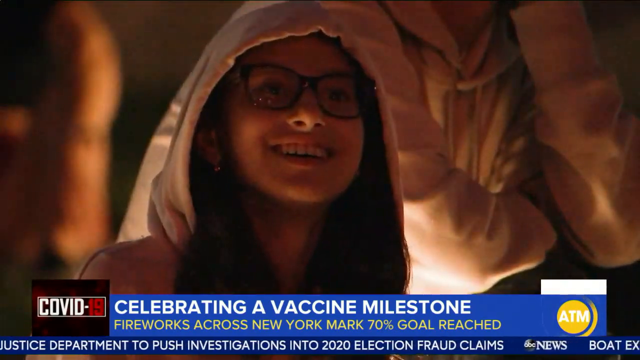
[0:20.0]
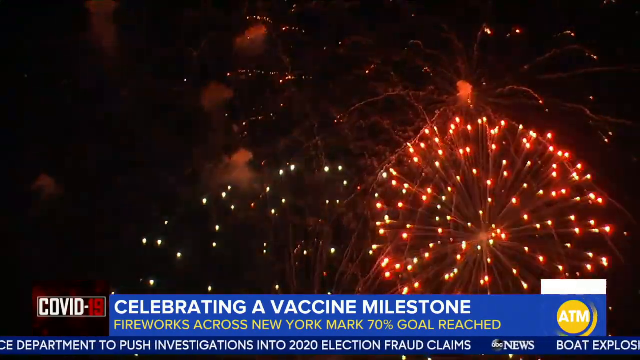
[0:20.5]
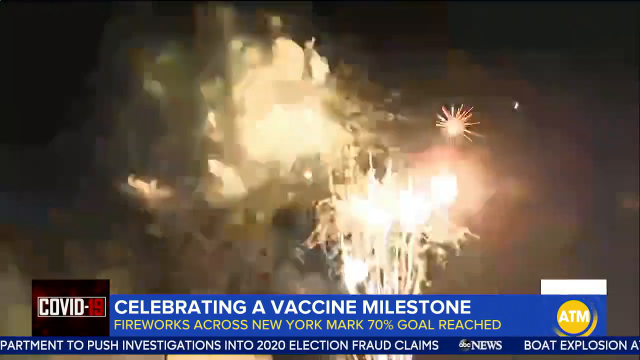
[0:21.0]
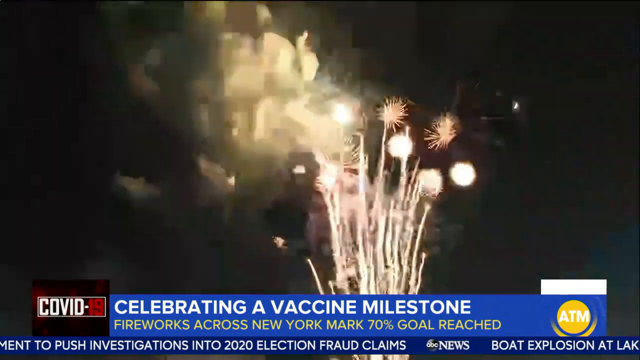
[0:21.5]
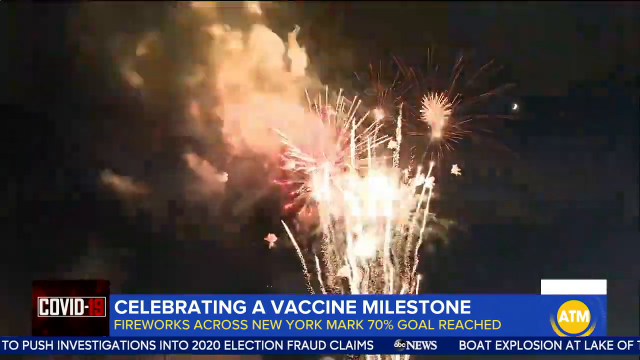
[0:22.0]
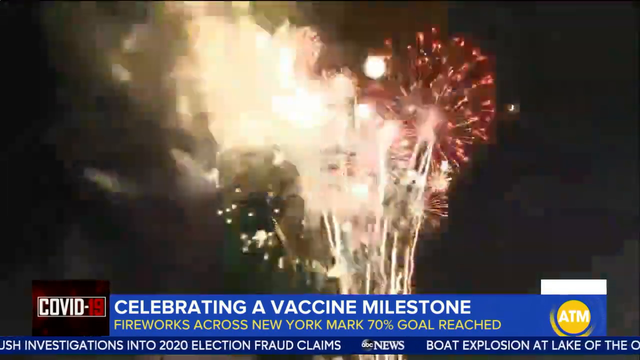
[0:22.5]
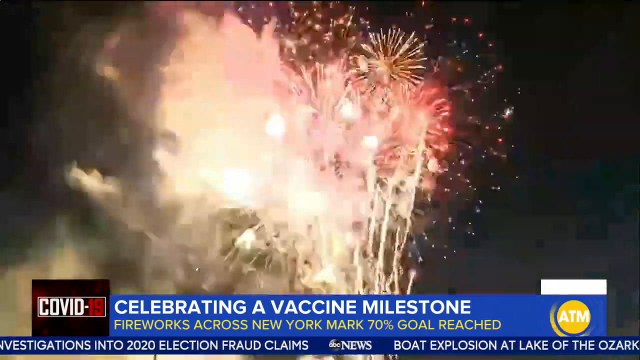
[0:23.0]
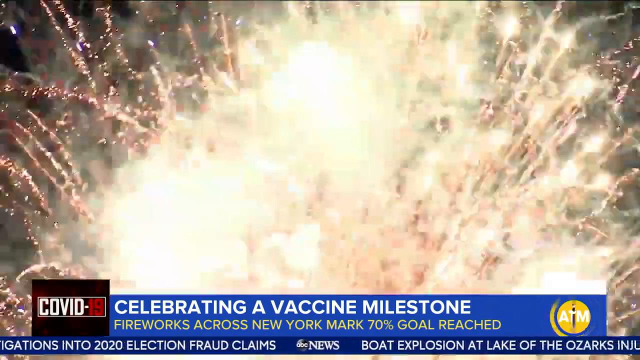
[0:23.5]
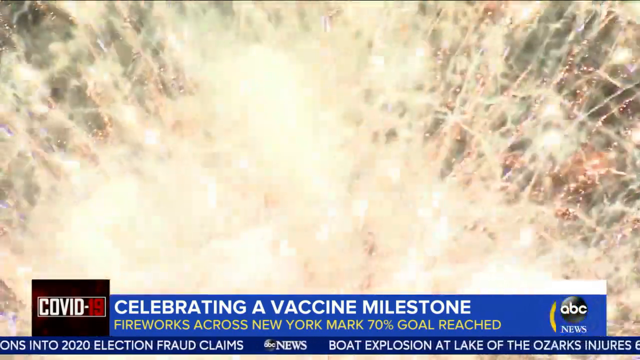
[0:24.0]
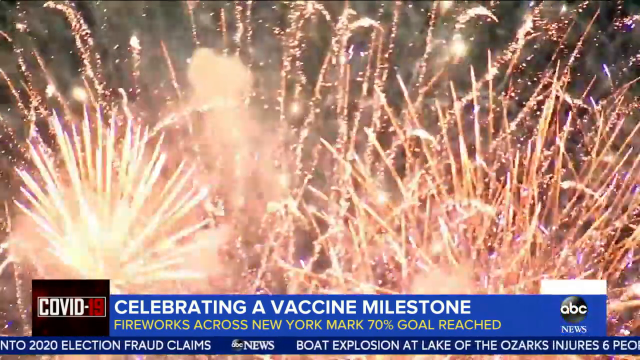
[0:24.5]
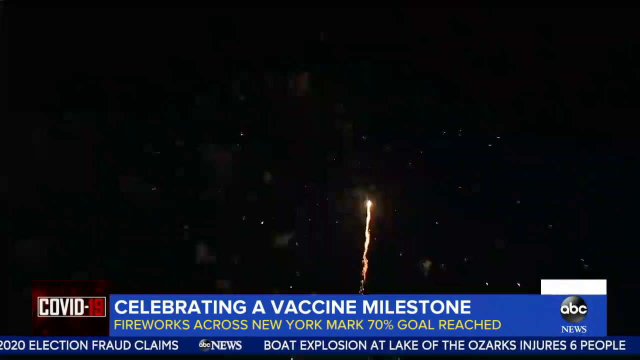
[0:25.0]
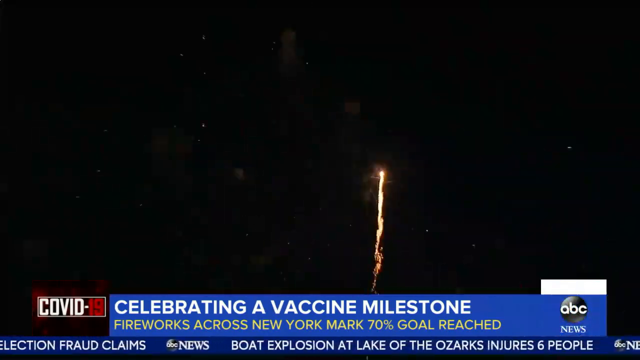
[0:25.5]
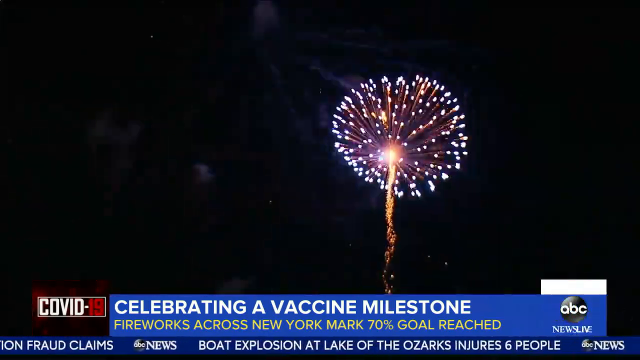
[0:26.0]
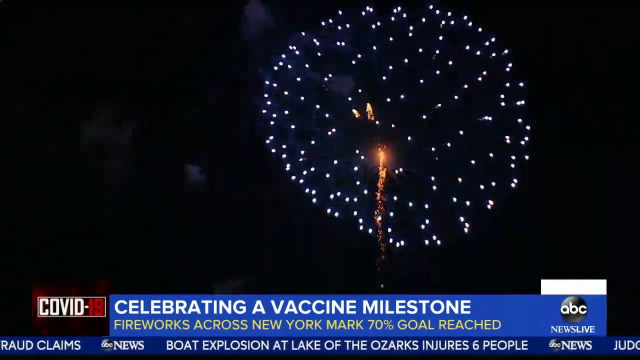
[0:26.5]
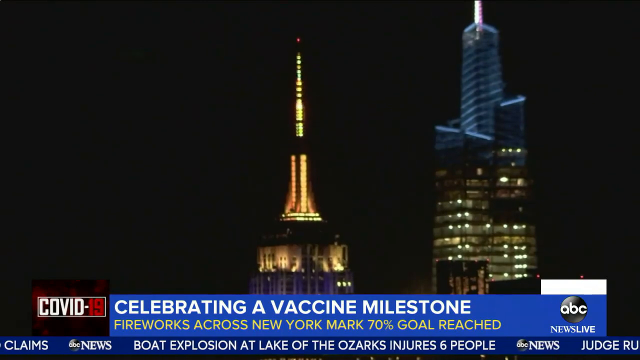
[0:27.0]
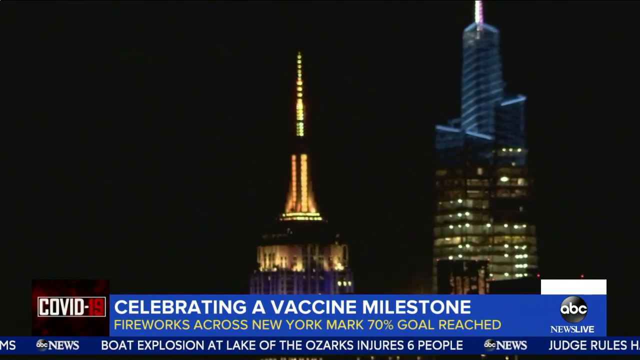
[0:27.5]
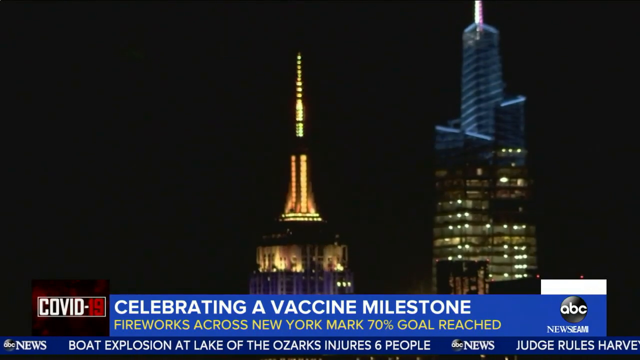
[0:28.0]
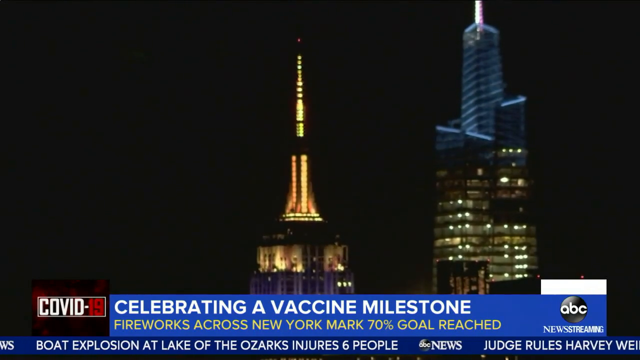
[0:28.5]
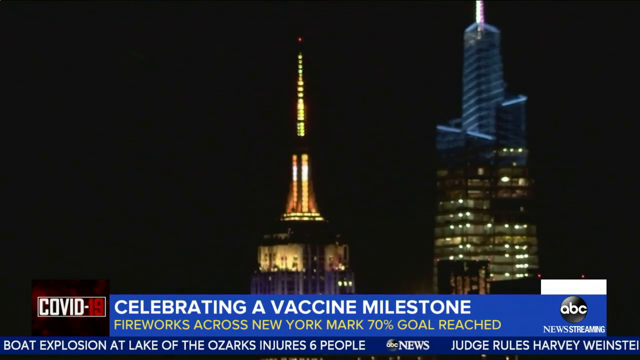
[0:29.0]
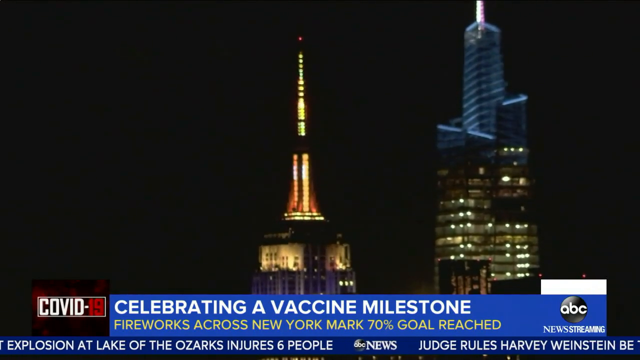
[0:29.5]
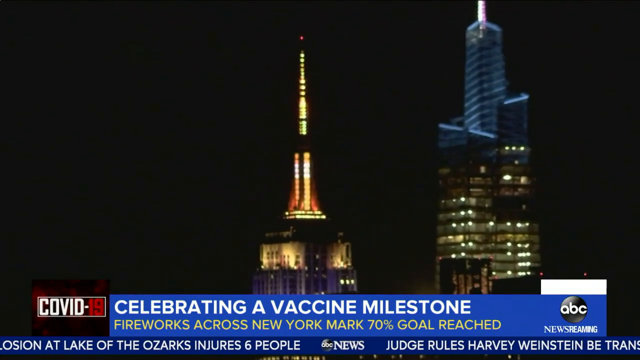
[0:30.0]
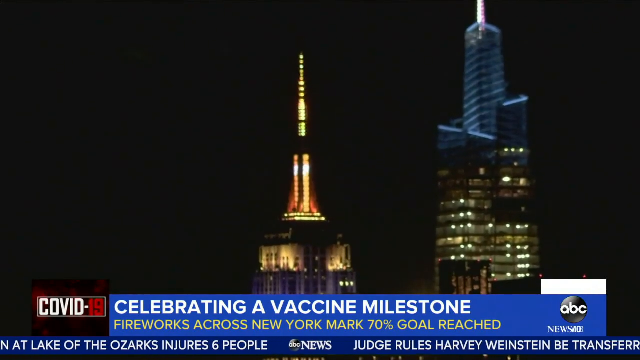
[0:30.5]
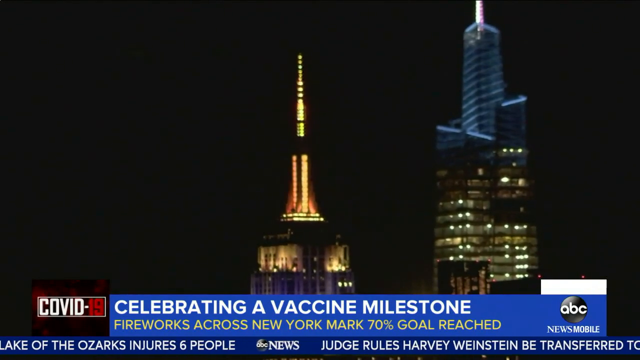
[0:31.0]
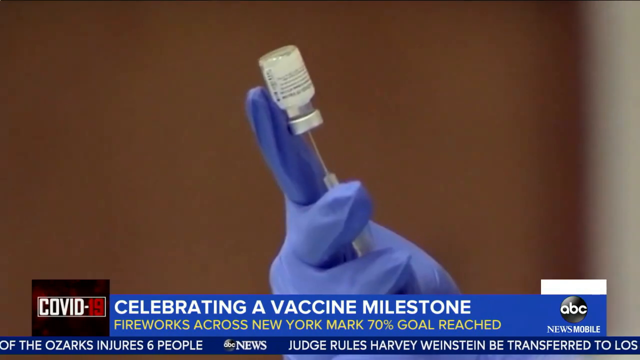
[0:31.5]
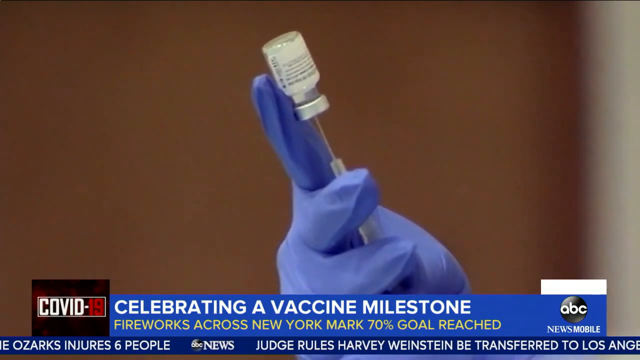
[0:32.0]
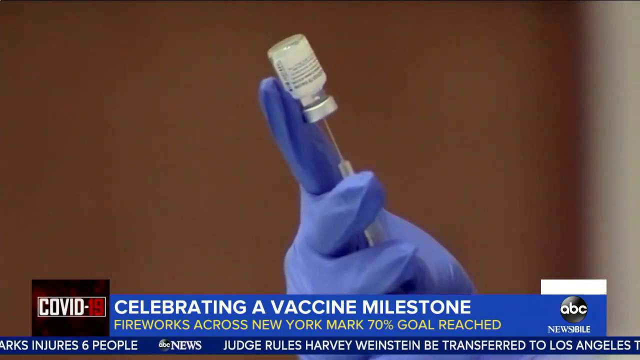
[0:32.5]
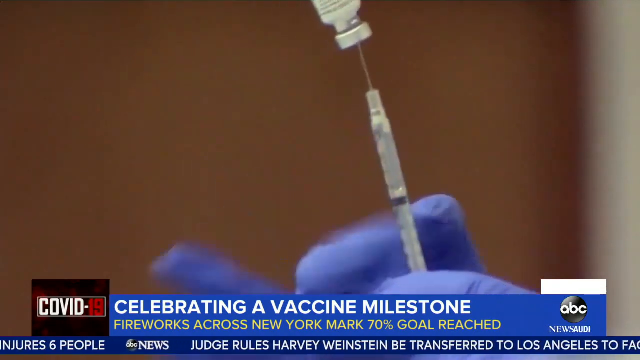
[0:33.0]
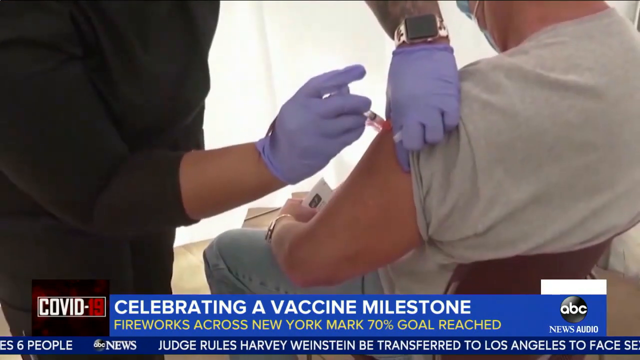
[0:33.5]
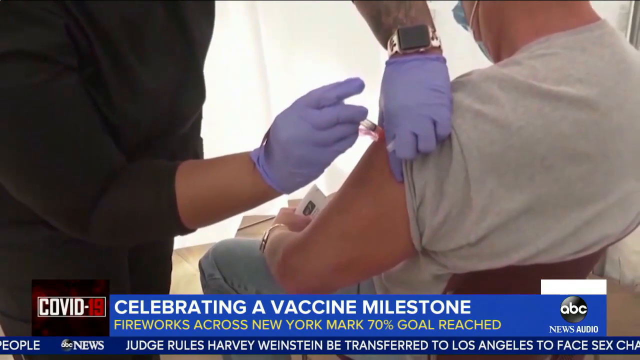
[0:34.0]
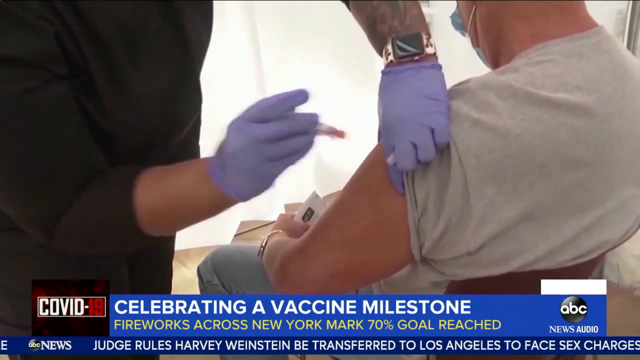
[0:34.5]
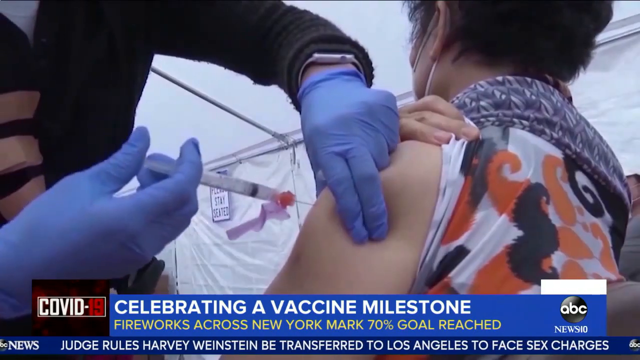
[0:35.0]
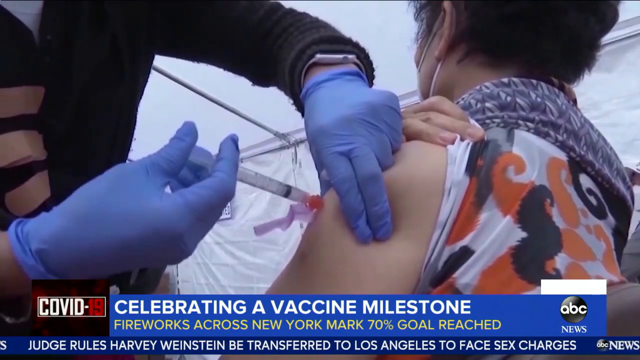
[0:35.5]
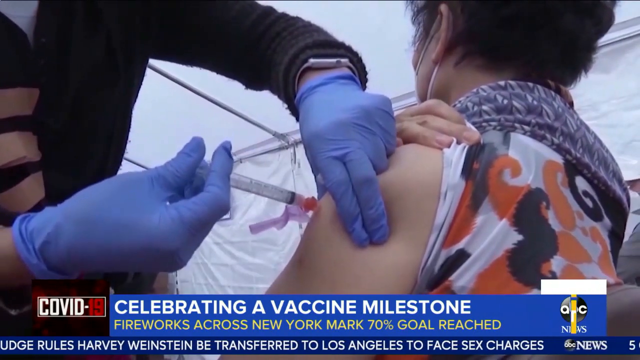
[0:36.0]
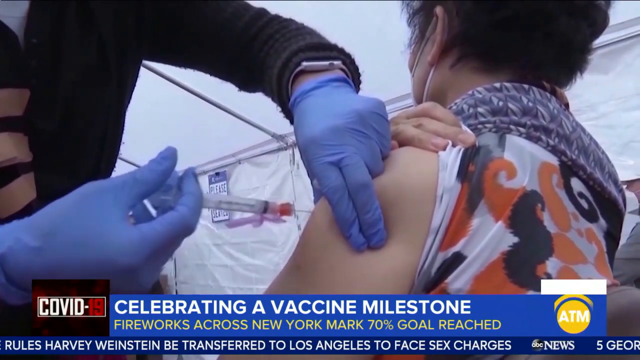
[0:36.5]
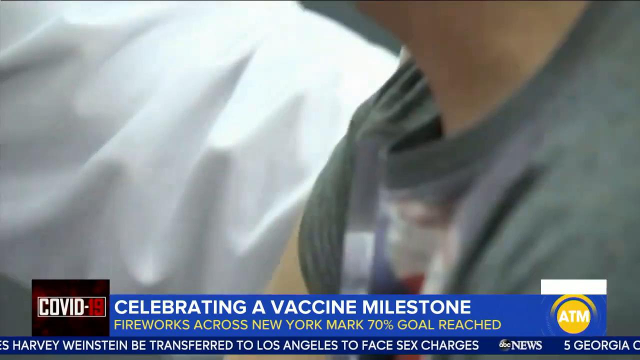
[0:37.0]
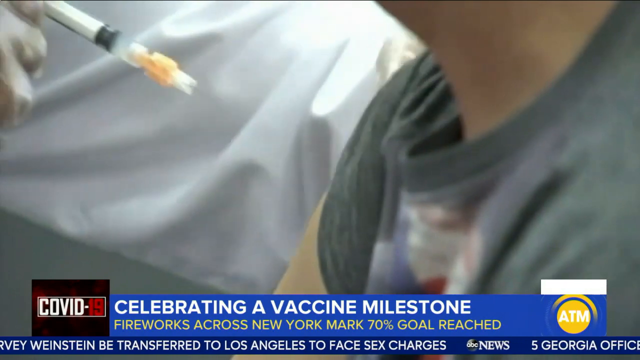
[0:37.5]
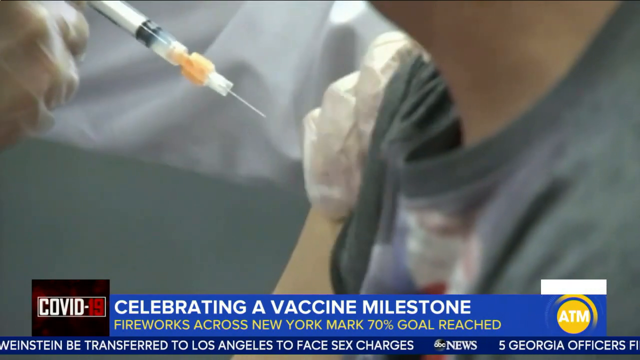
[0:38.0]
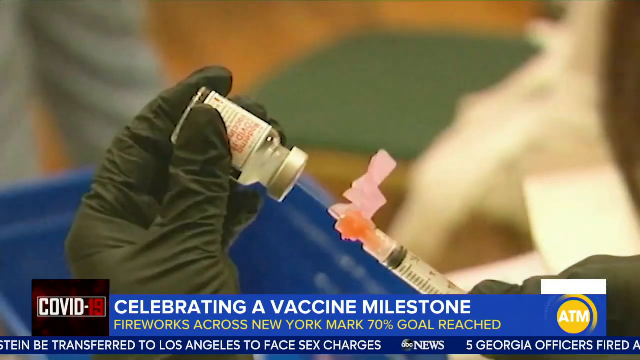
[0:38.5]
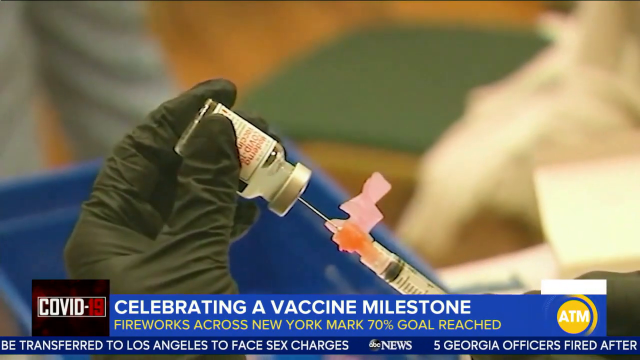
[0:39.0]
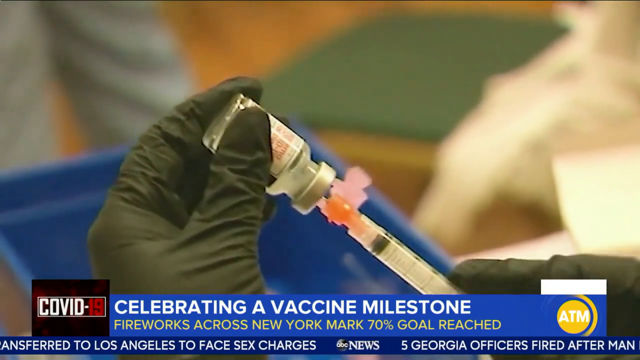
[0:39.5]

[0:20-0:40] A girl looks up to the sky. She wears glasses with black frames and a pink hoodie on top of her head, with her long dark hair coming out of it, and she is smiling. Behind her is another person also wearing a pink sweater. The video cuts to the sky, where a whole bunch of fireworks explode, emitting red, yellow and green lights, and a close-up shows purple. What looks like an orange streak goes up into the sky and, as it explodes, turns from orange to a violet color. The top of a lit-up building is shown with green and orange on it; the top of the building almost looks like a needle. White text at the bottom of the screen reads "celebrating a vaccine milestone." A person wearing blue latex gloves holds a needle in the left hand, and with the right hand seems to position a container holding liquid as the needle pierces the container. A person sitting down gets a vaccine shot from another person wearing purple gloves. The video cuts to another person getting a vaccine shot, then another, and then shows somebody holding a needle and what appears to be a container in the left hand, wearing black latex gloves.